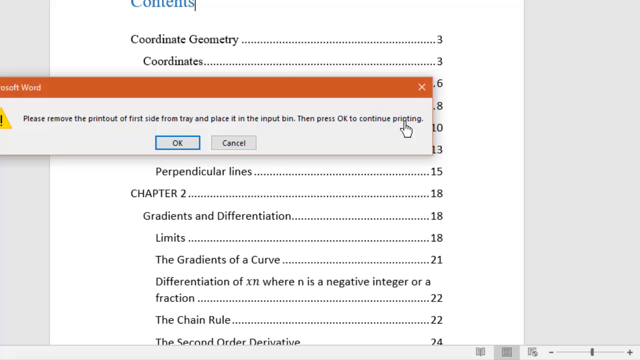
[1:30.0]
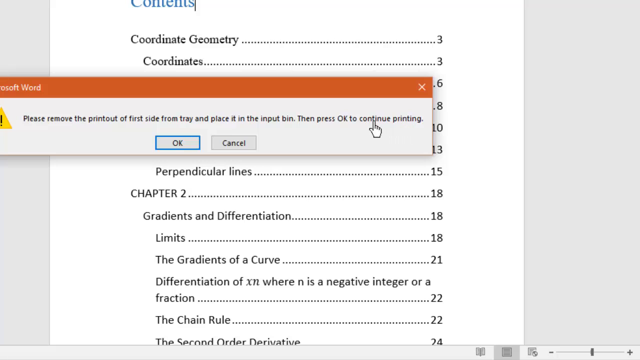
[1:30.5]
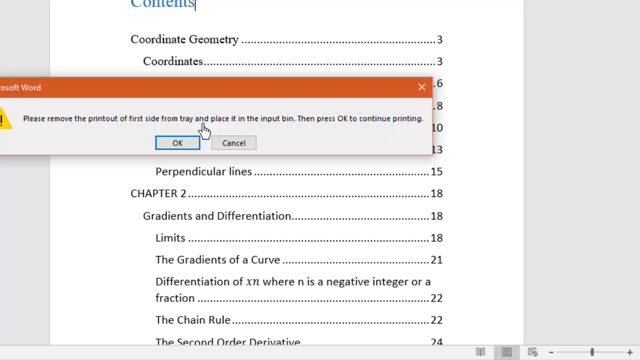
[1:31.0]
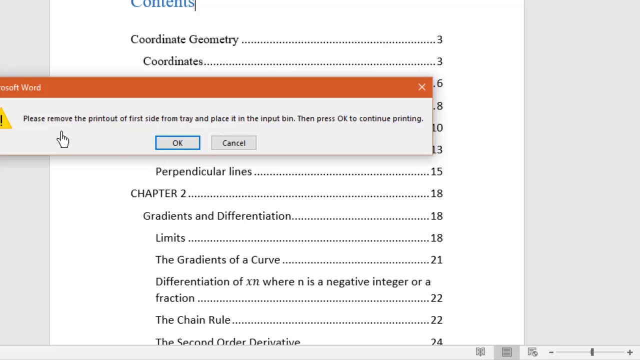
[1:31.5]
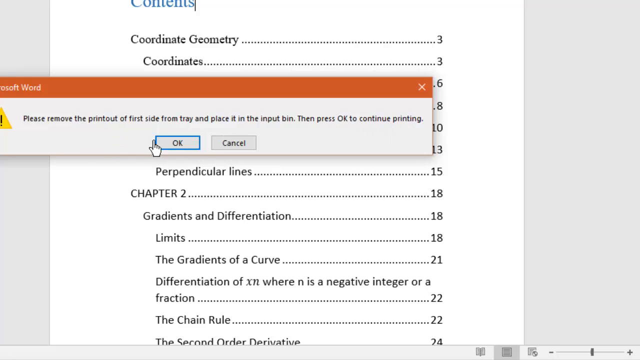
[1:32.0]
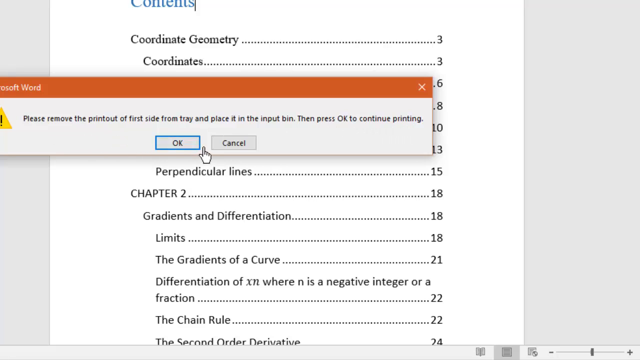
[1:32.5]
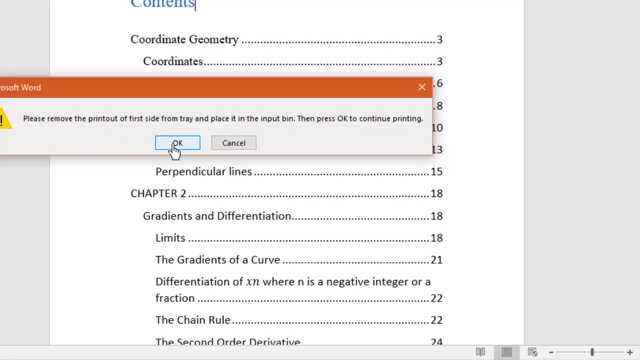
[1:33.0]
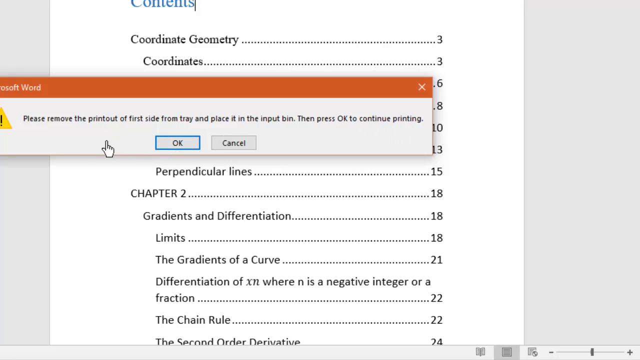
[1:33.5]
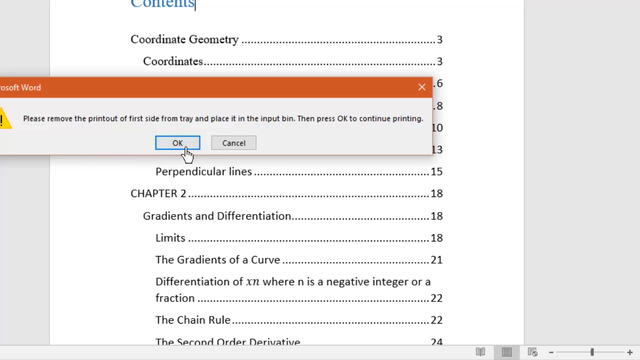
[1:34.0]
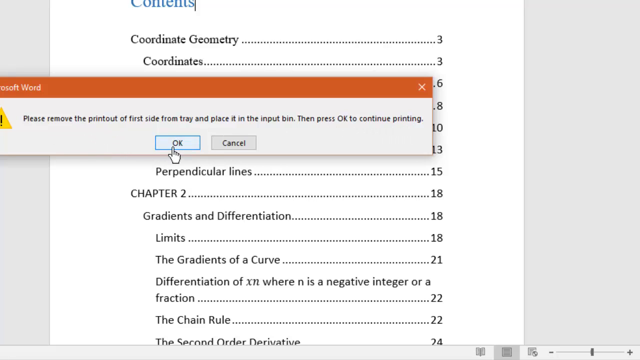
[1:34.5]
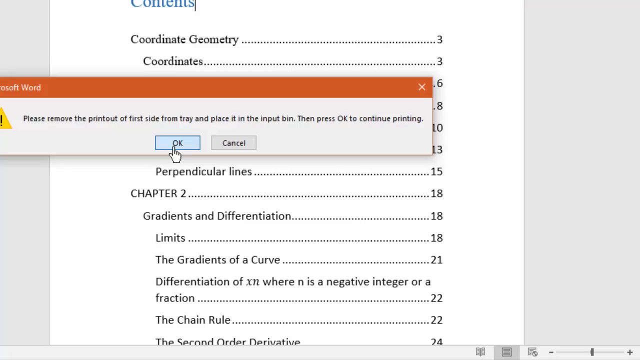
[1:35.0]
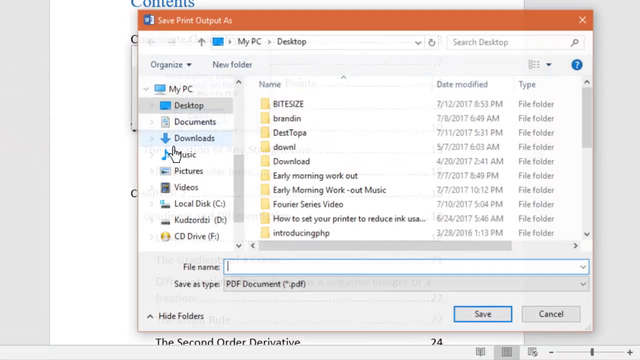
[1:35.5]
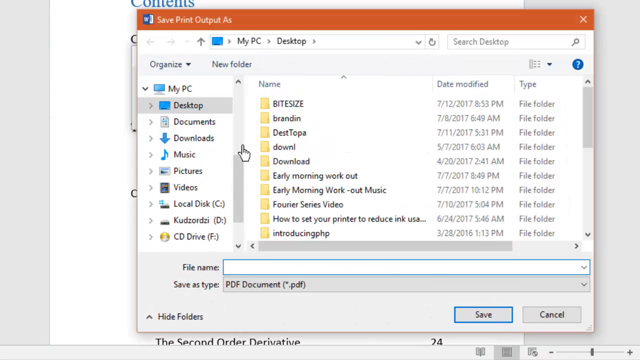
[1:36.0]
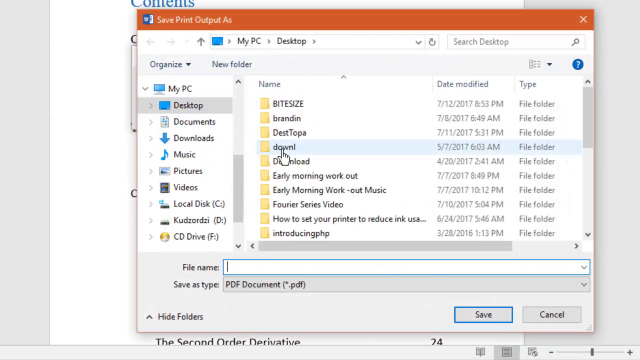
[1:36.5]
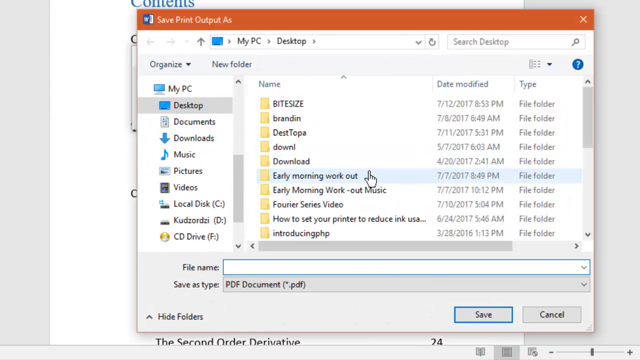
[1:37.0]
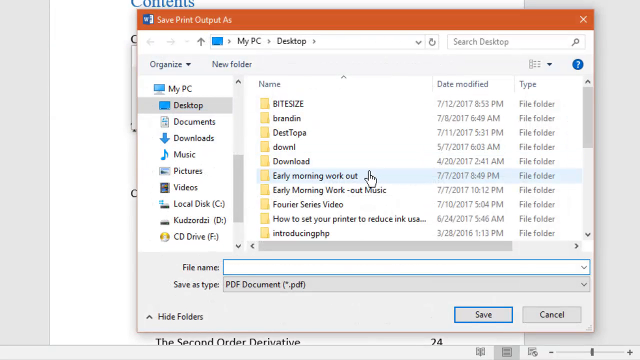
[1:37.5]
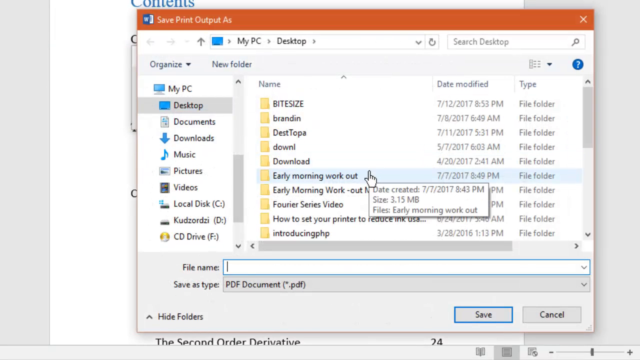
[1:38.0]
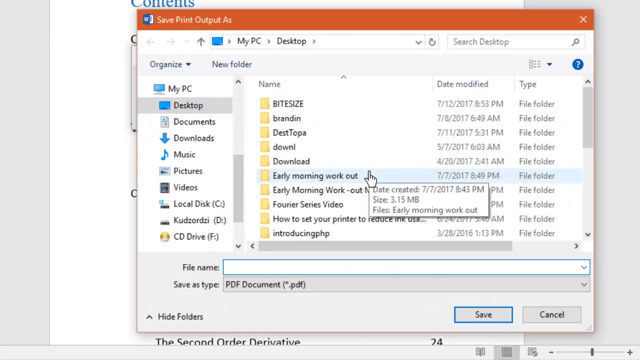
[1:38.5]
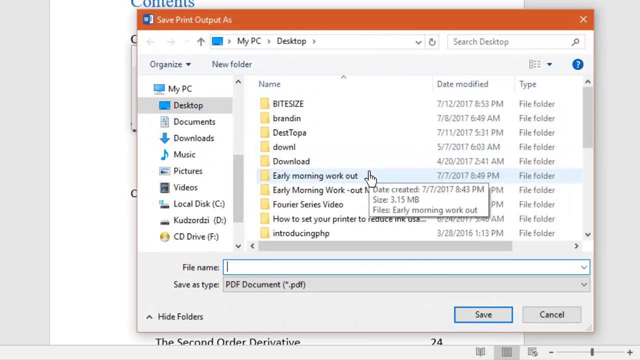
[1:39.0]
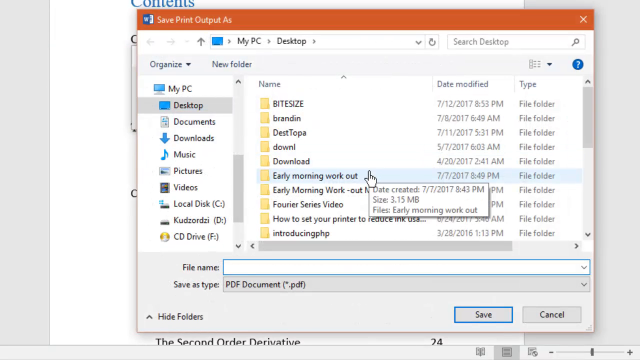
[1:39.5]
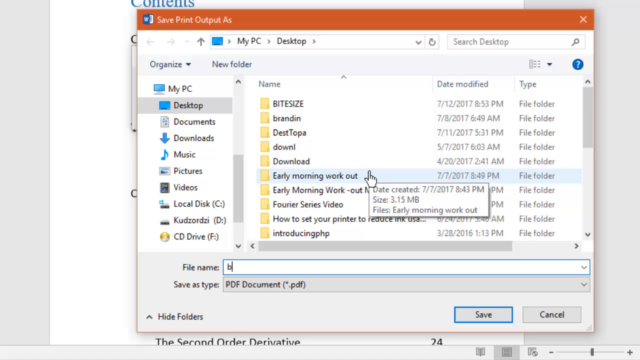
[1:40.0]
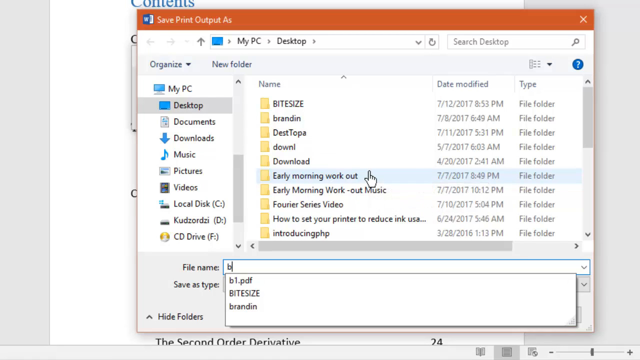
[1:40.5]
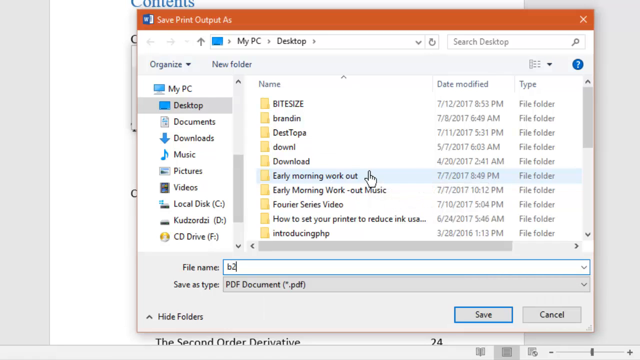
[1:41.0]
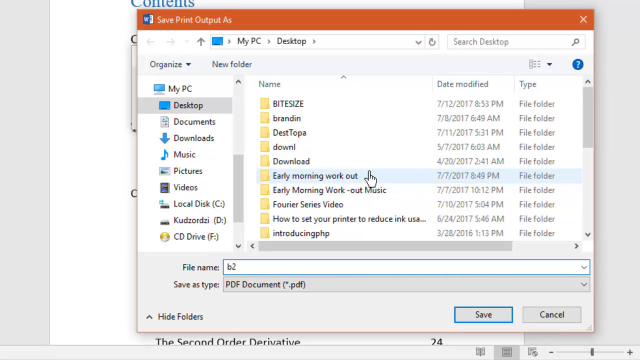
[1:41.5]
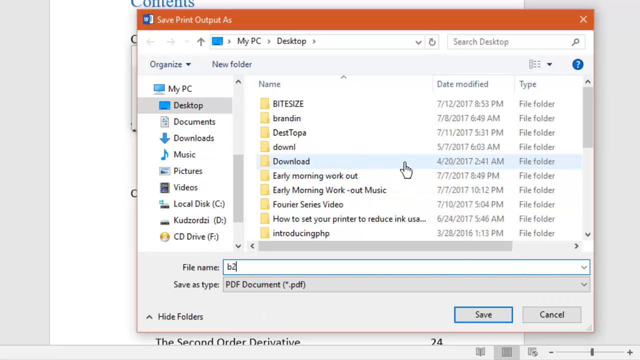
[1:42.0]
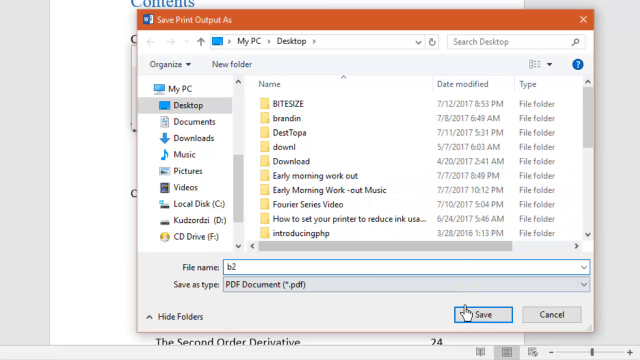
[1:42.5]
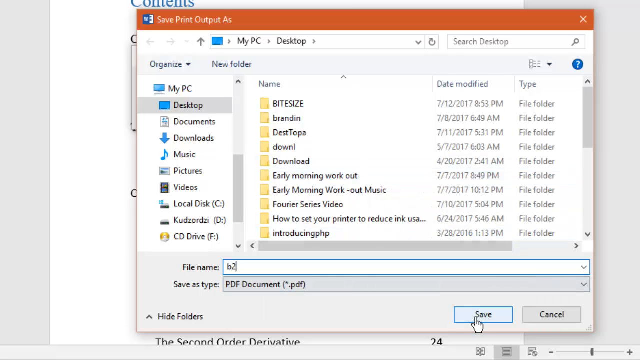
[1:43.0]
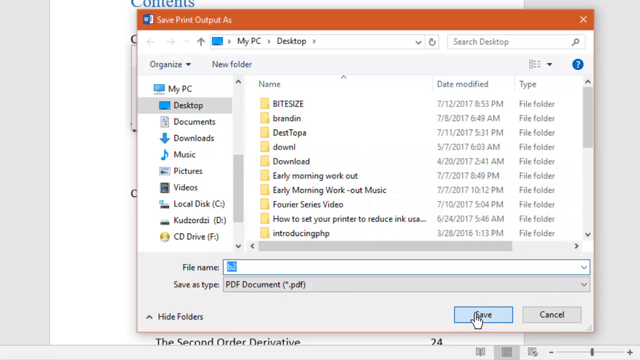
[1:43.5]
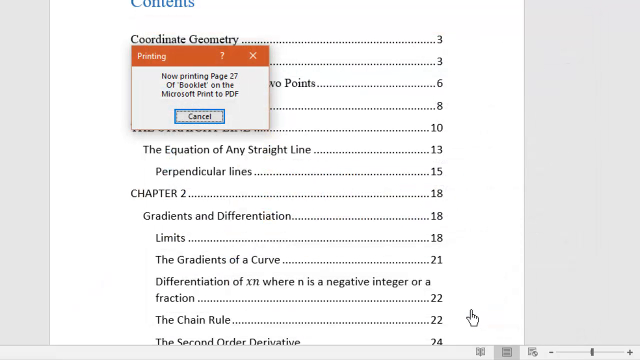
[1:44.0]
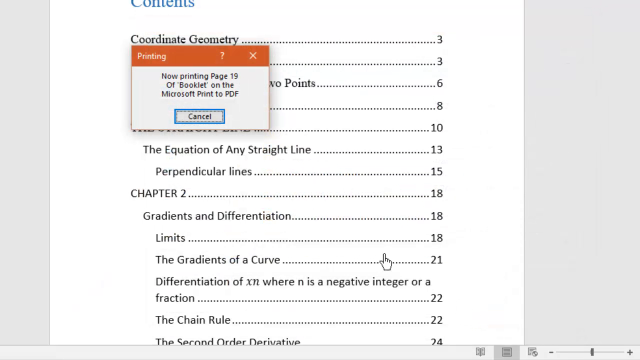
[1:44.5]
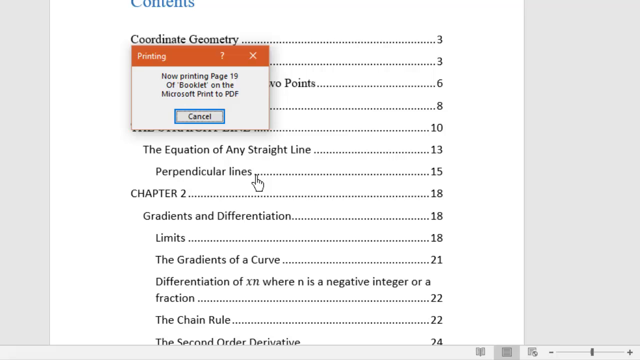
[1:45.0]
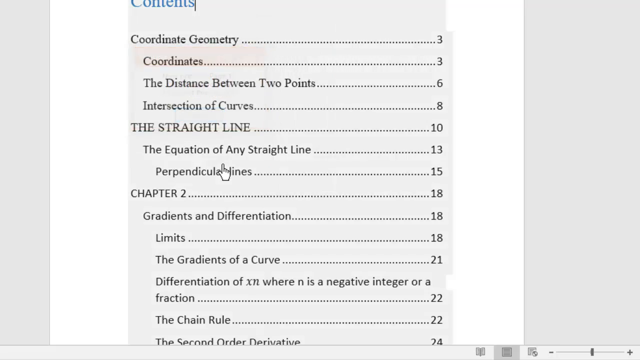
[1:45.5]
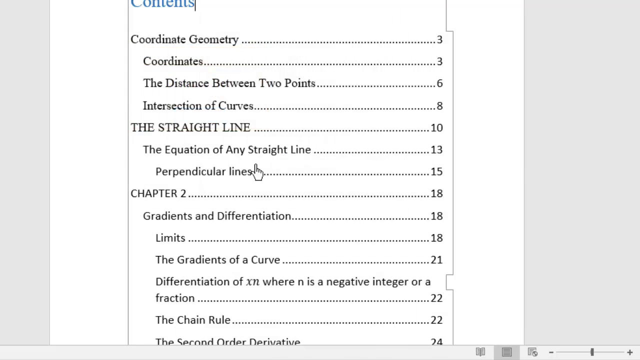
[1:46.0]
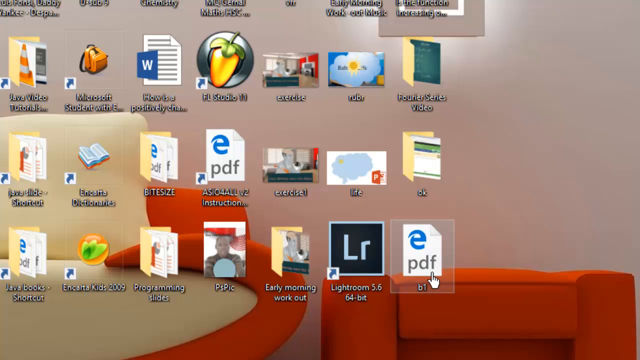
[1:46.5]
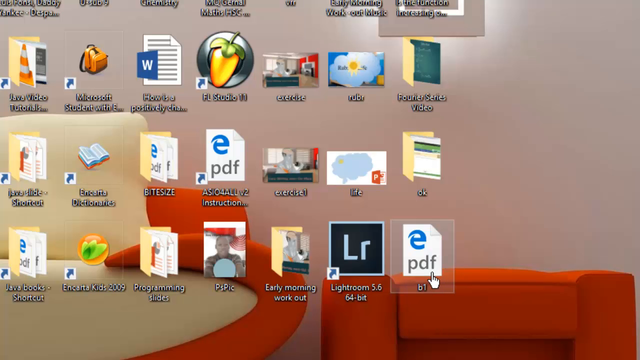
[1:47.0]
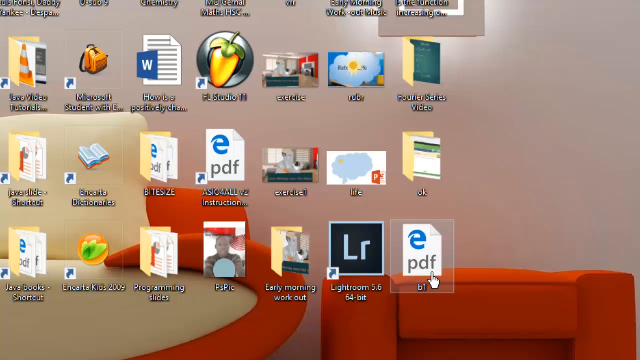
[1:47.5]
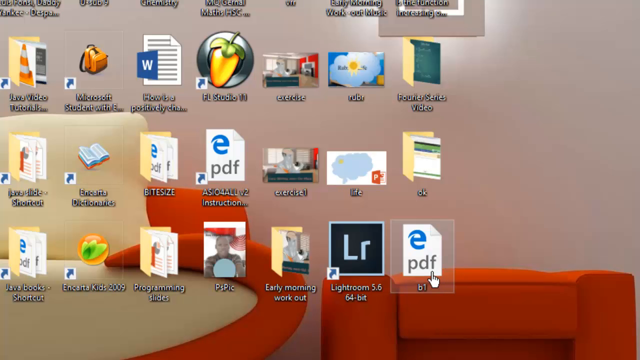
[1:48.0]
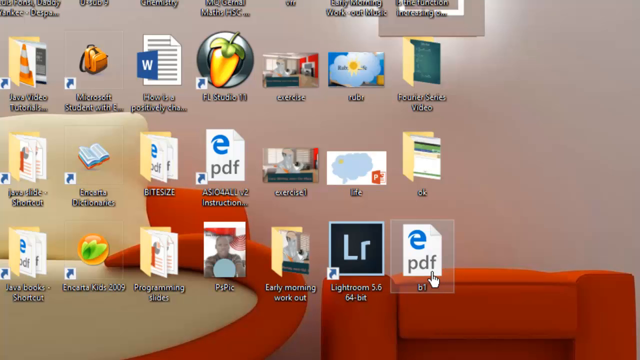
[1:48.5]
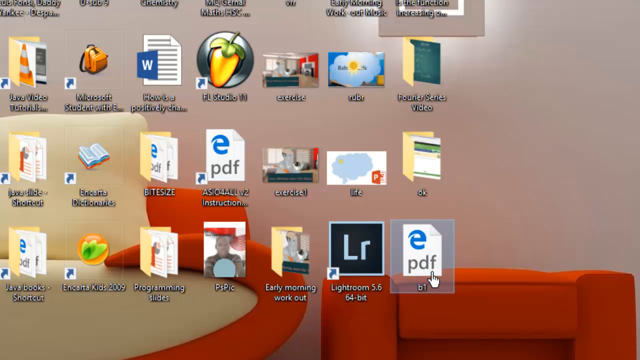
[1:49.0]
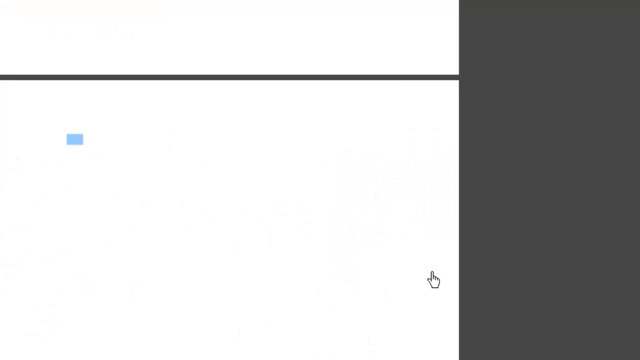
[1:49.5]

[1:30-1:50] A pop-up box is on the Microsoft Word page, with an orange banner at the top that says "Microsoft Word." A yellow triangle with a black exclamation point is shown, and to the right the text says "Please remove the printout of first side from tray and place it in the input bin. Then press OK to continue printing." The cursor, which looks like a right human hand with a pointing finger, moves left to right in a few strokes over the box, then goes to the OK button, highlighted in blue, and clicks OK. Another box opens, the "Save Print Output As" box. The cursor goes over to the right, where a cursor is blinking, and "B2" is typed. Save is clicked with the mouse cursor, causing a print box to pop up showing a bunch of pages printing. After that, the selector is clicked out of altogether.